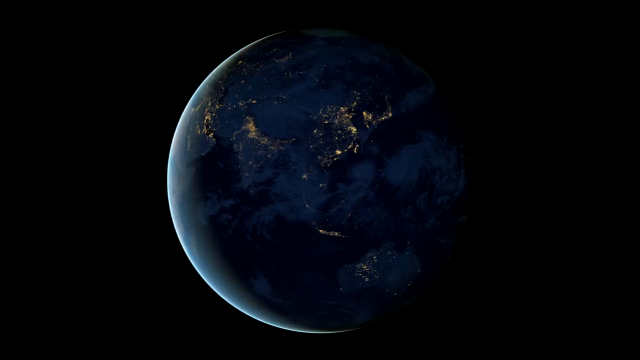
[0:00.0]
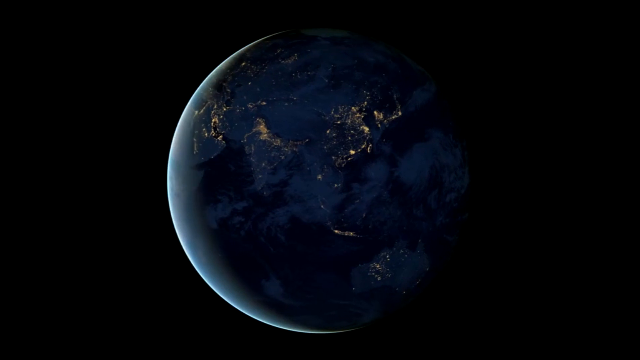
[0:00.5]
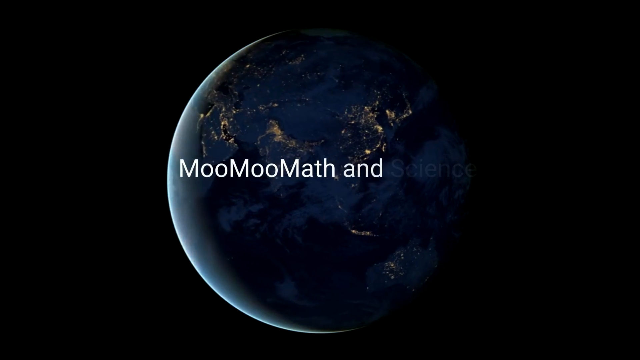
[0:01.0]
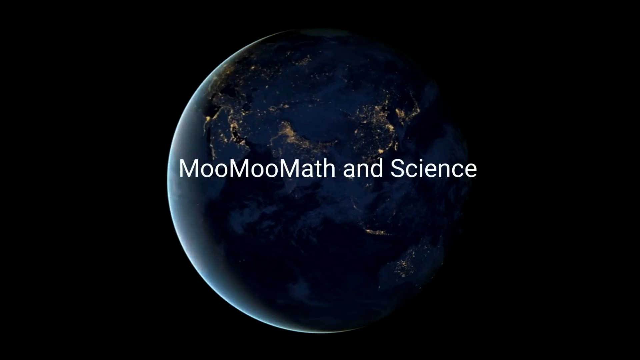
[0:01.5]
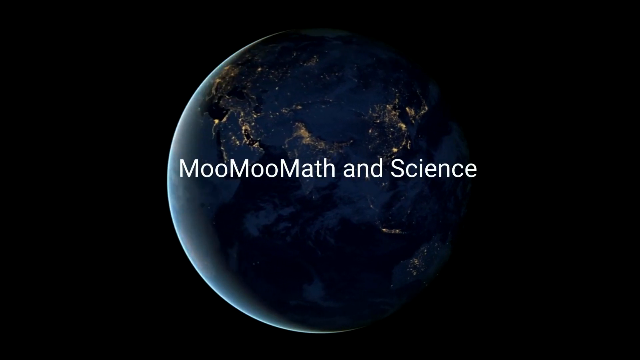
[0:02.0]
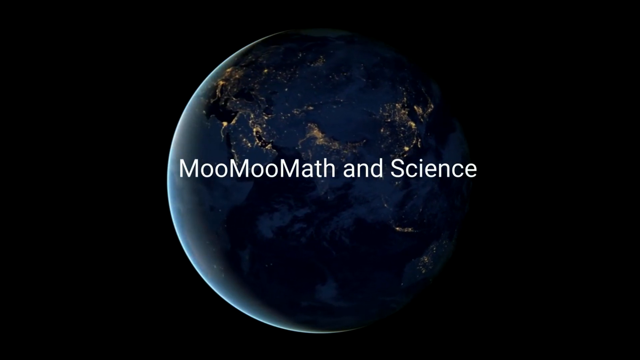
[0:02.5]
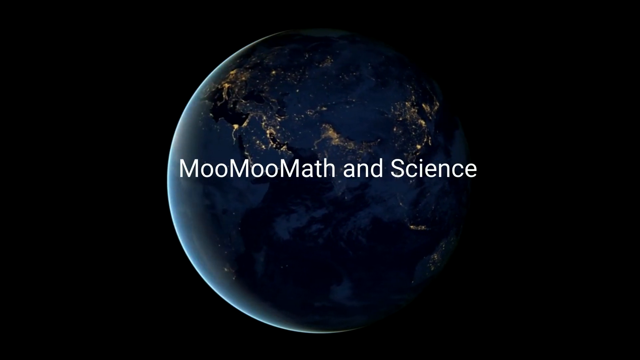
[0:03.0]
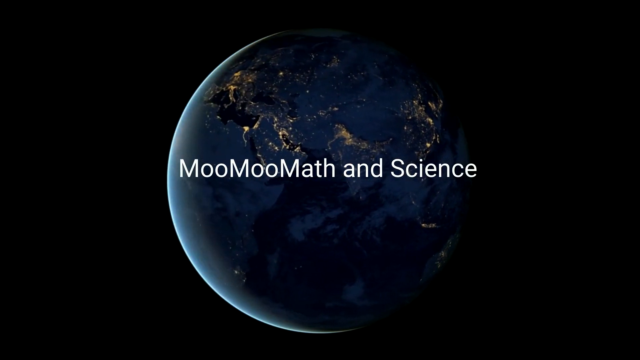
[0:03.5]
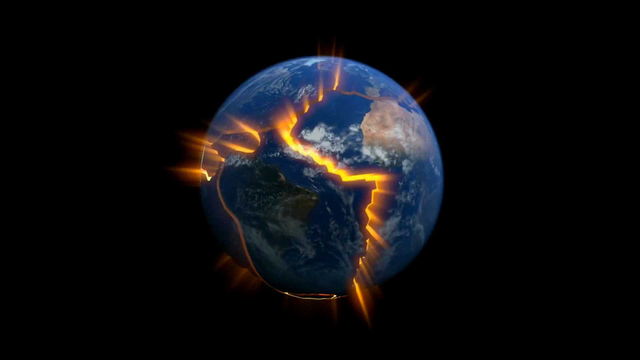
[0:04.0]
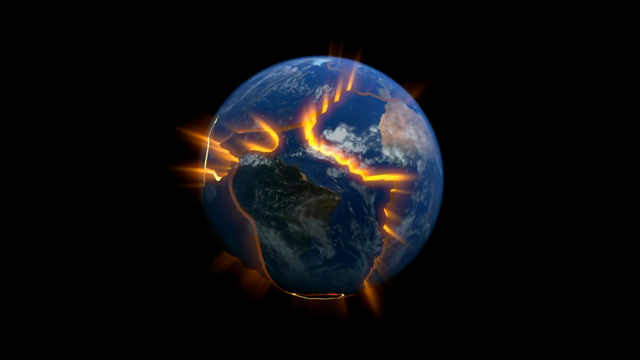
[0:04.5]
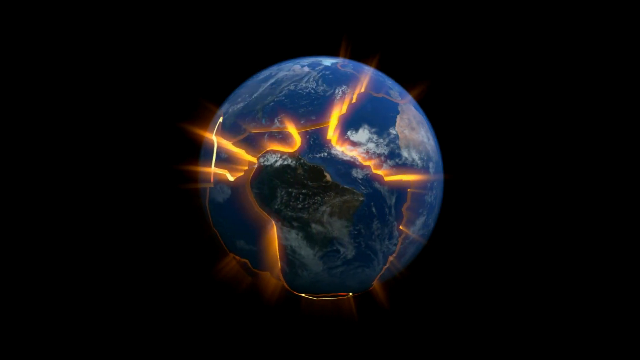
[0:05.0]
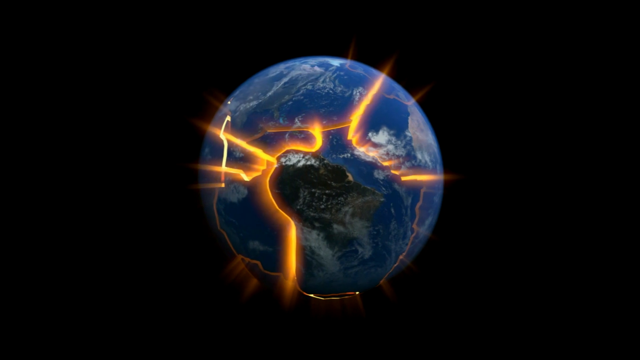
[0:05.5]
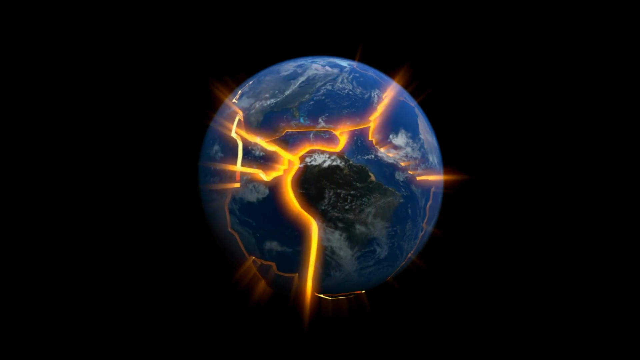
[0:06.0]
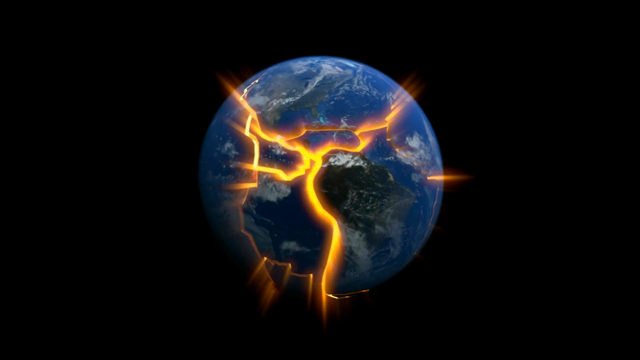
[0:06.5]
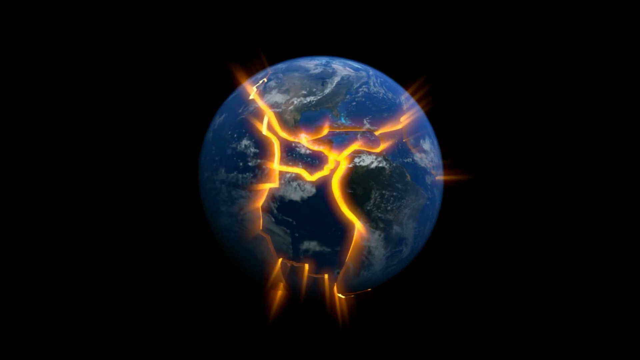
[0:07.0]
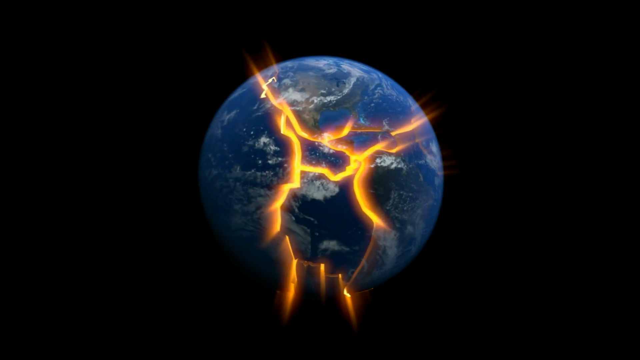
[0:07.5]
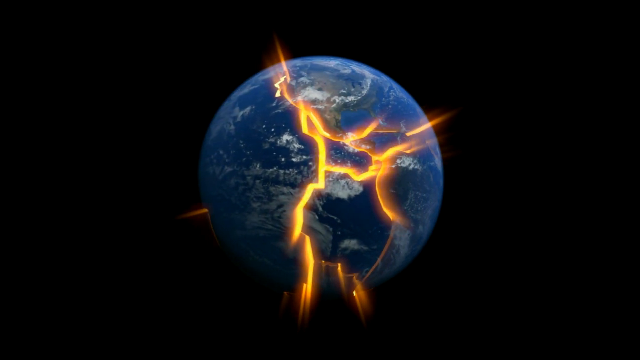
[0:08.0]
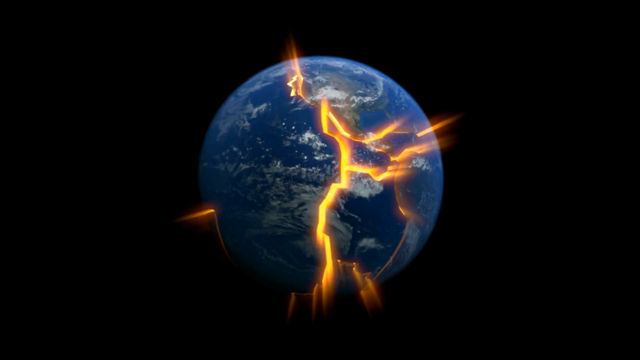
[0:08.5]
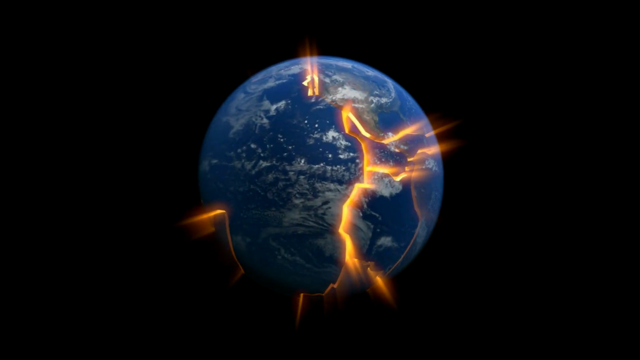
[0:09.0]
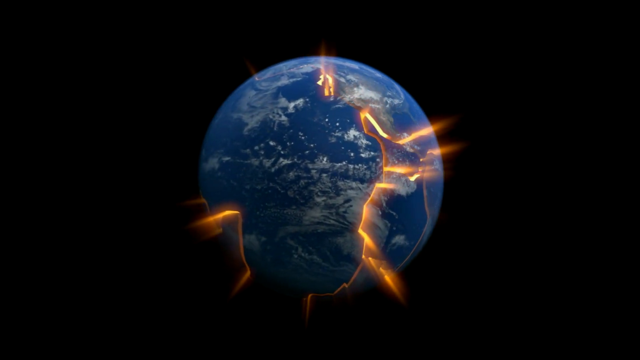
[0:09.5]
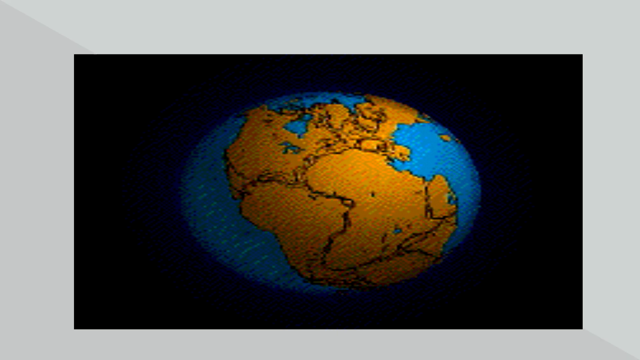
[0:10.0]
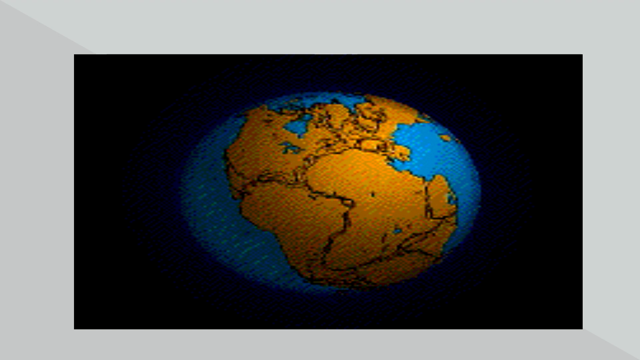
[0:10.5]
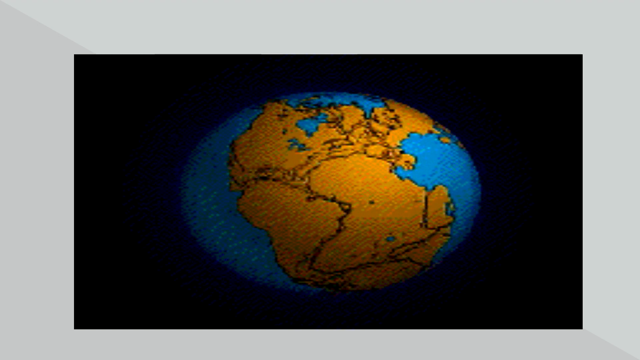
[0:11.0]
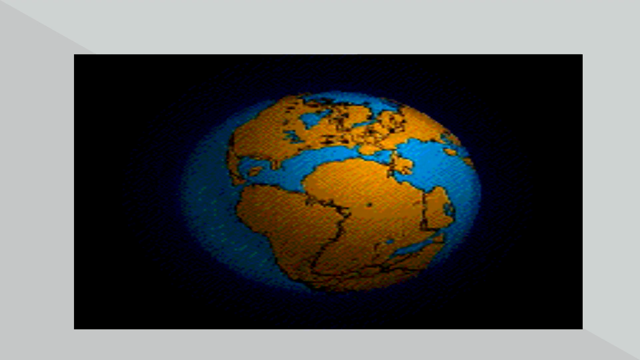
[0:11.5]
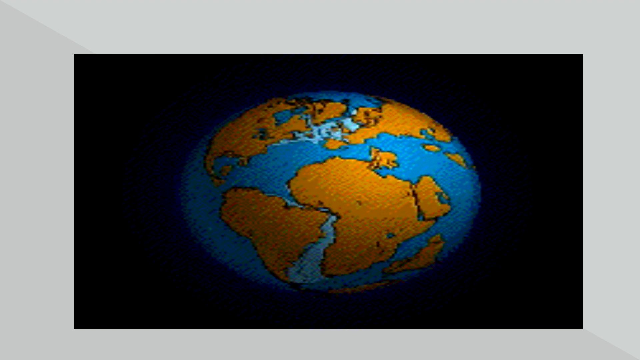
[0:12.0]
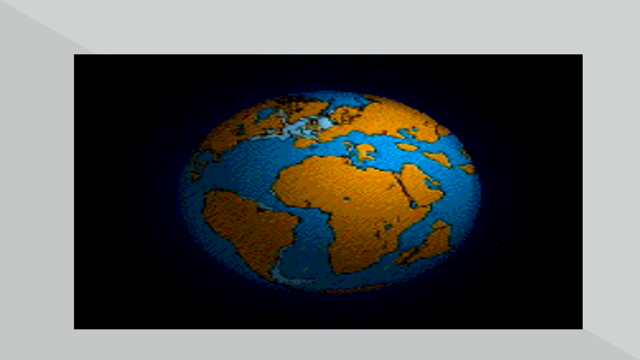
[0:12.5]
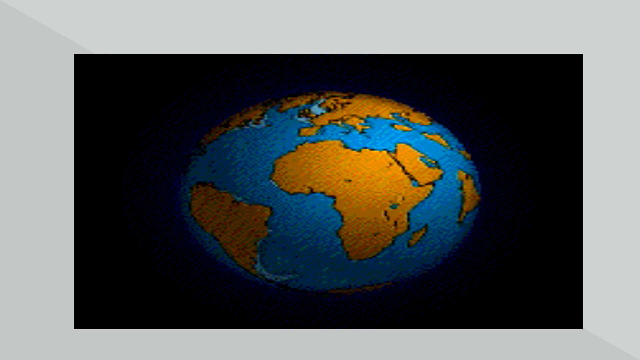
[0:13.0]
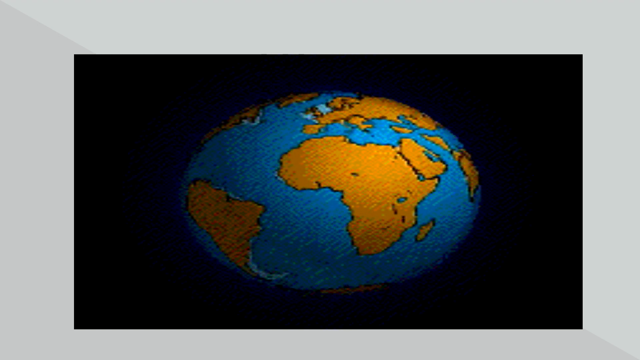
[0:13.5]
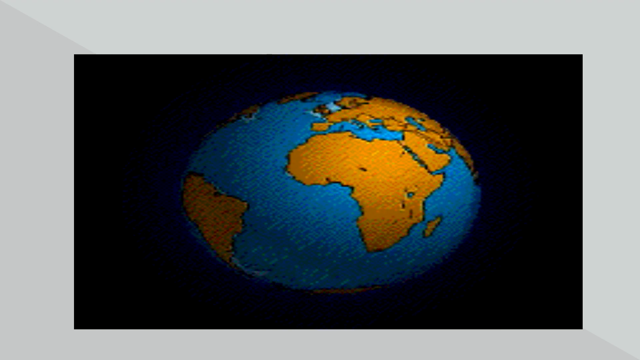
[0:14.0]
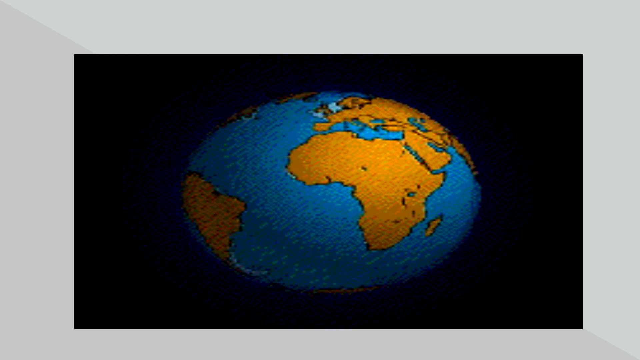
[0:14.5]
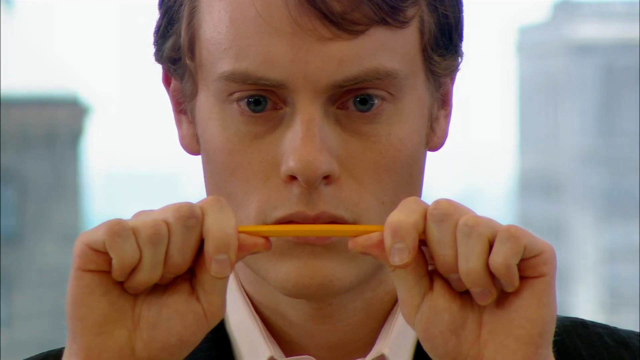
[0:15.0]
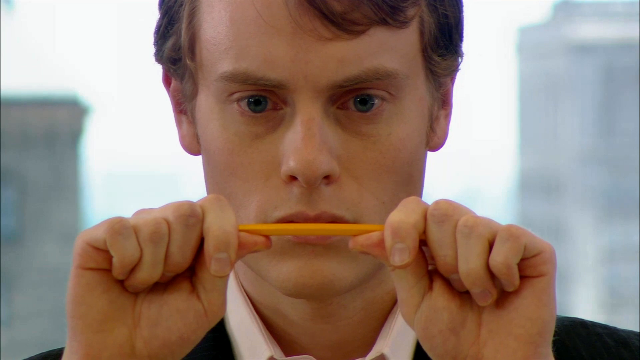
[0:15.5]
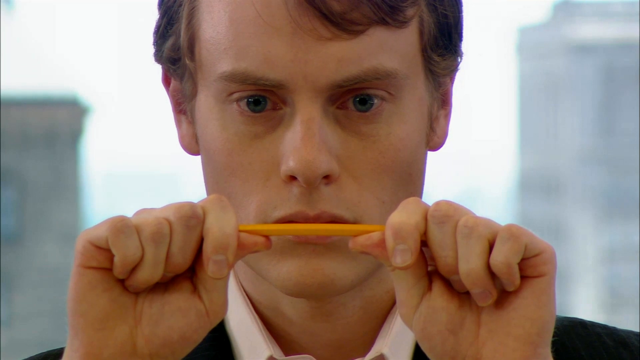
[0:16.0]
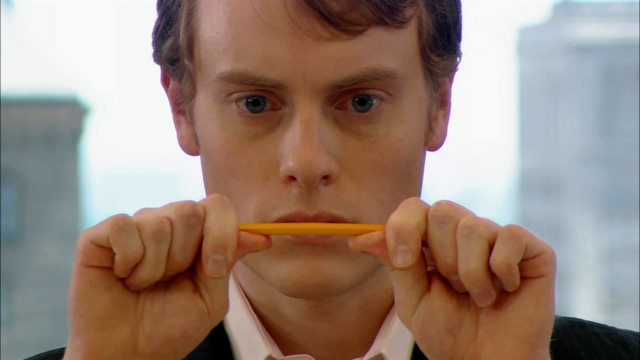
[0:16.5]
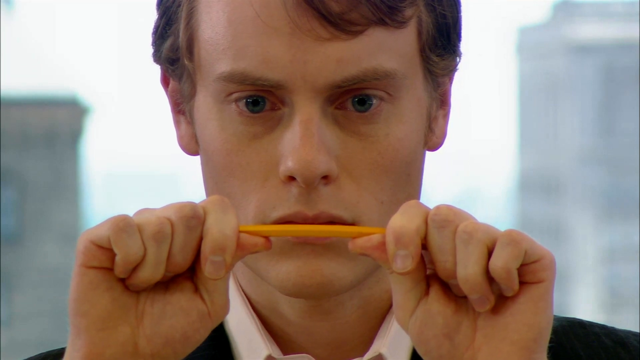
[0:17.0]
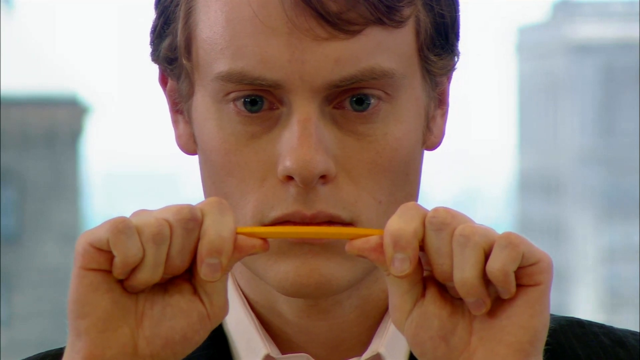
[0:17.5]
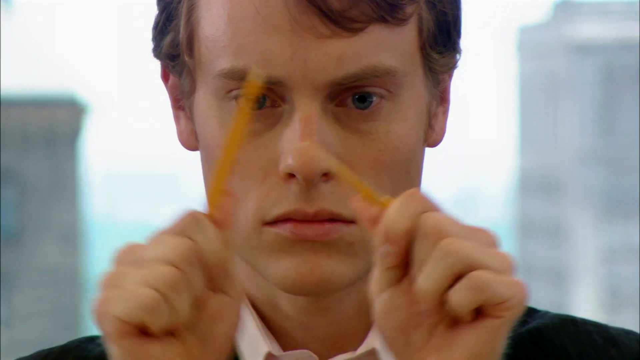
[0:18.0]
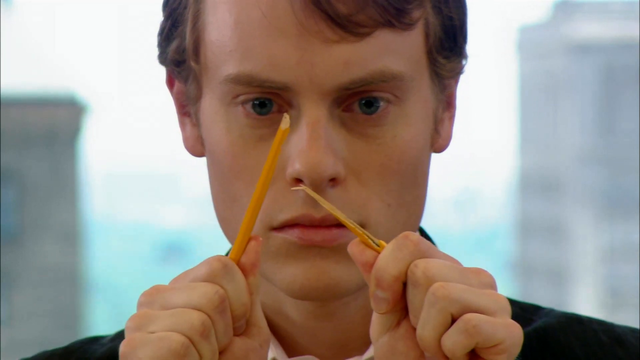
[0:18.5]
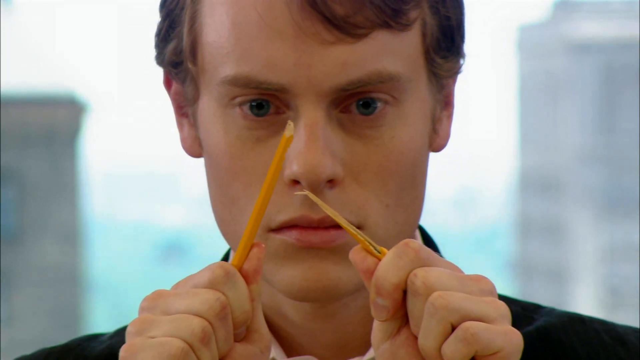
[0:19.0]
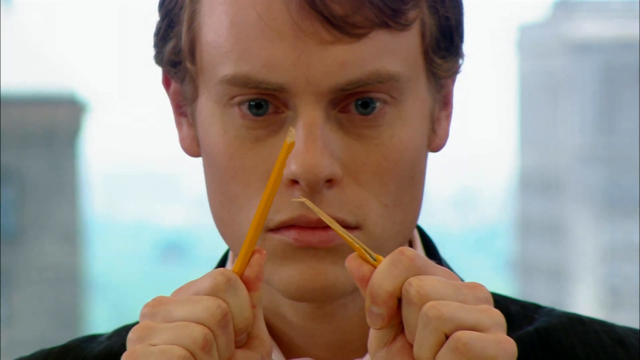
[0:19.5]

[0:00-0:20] A planet that looks like Earth appears, dark bluish against a black background, and the words "moo moo math and science" are written on screen. The planet then develops yellow-to-goldish lines, and the continents begin to separate, especially Africa from the rest. It apparently shows how the sea began on the planet. Next, a white man breaks a yellow pencil; he looks very morose. Afterward, the planet is shown again in its natural state.